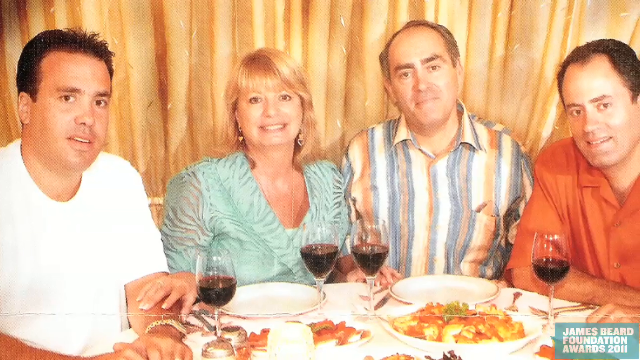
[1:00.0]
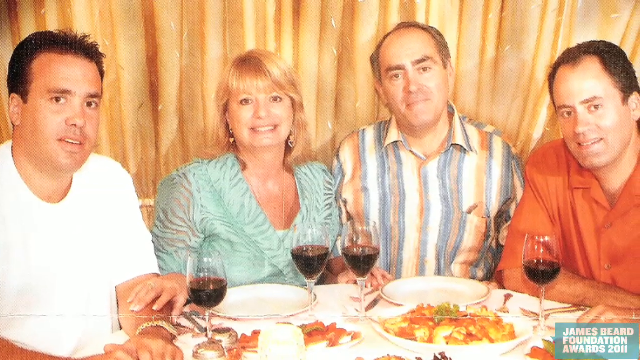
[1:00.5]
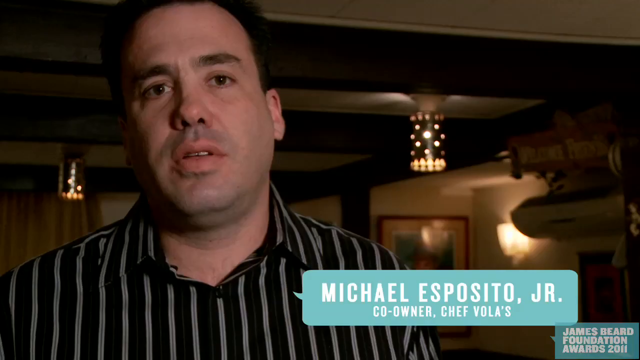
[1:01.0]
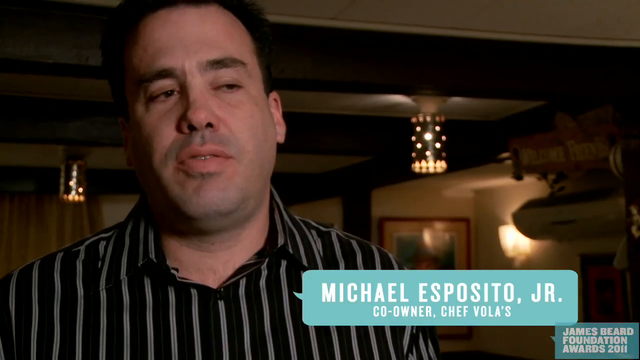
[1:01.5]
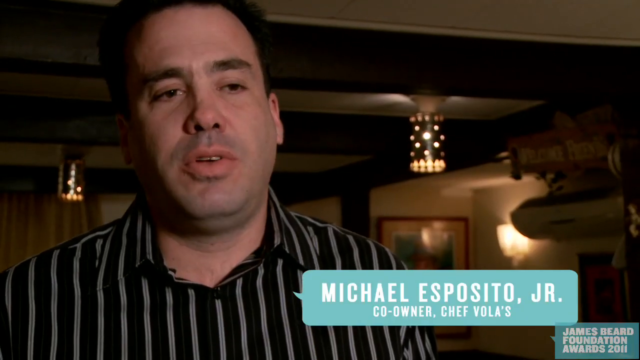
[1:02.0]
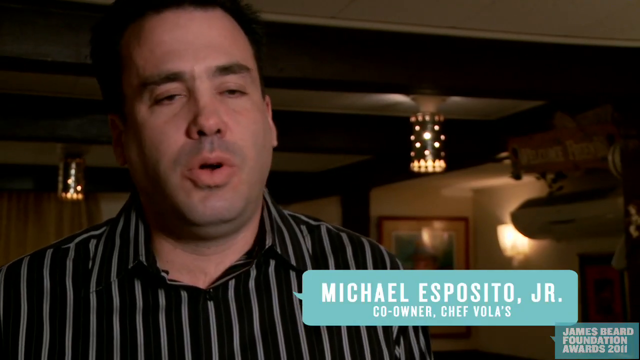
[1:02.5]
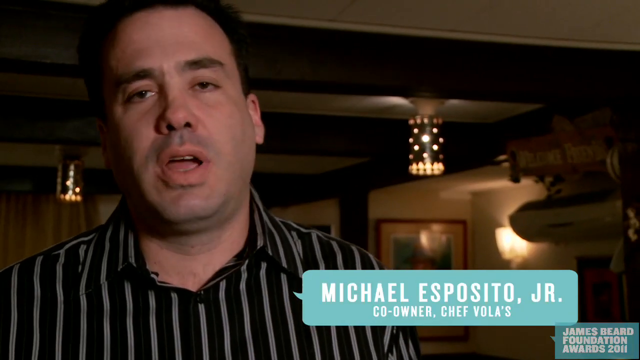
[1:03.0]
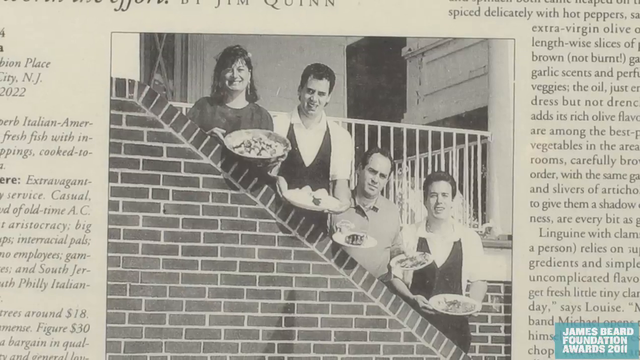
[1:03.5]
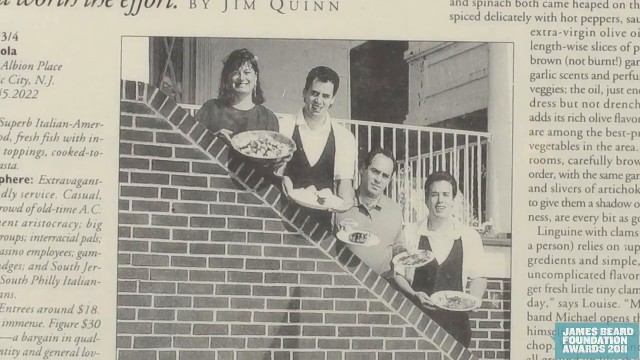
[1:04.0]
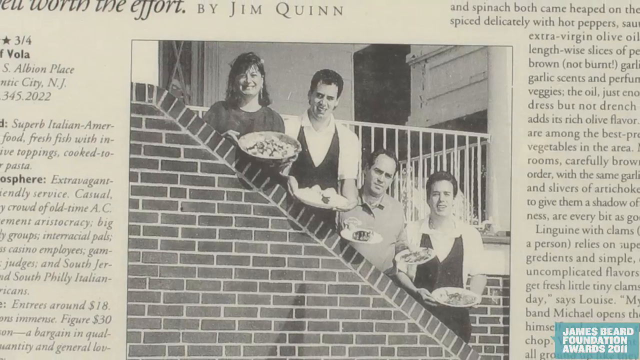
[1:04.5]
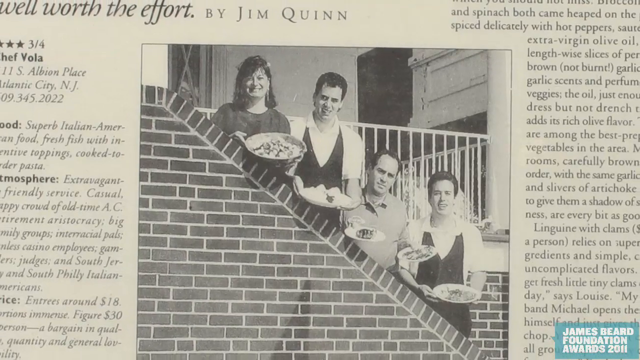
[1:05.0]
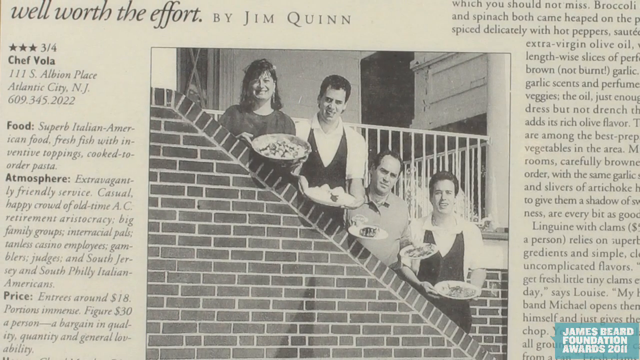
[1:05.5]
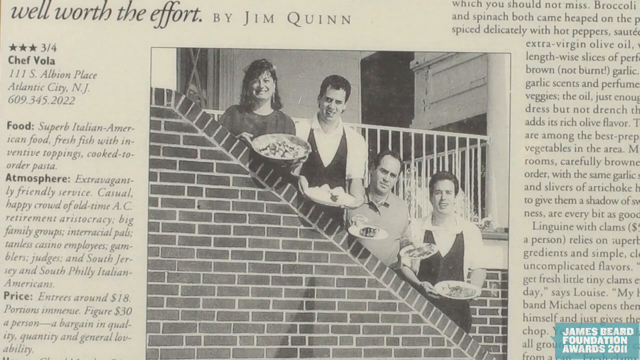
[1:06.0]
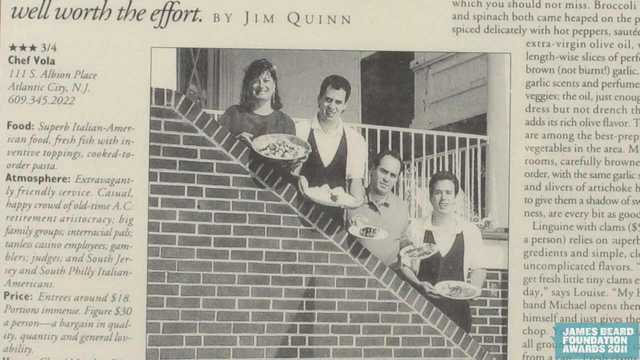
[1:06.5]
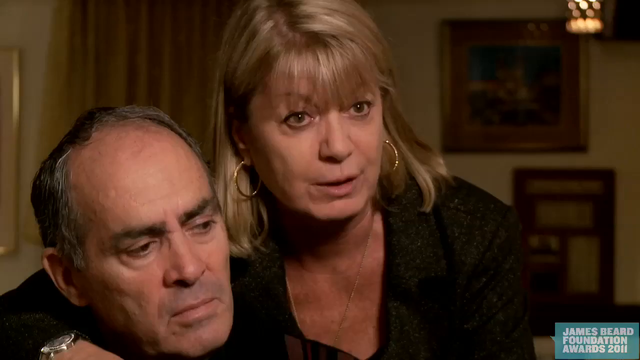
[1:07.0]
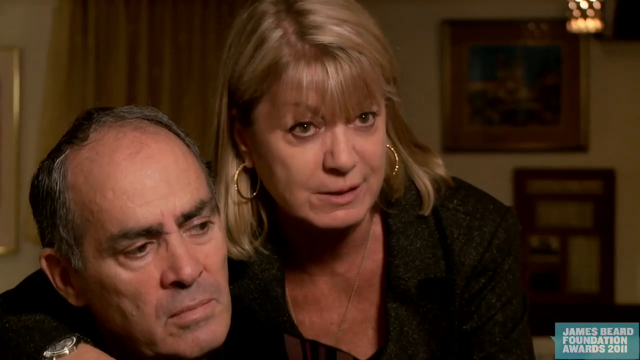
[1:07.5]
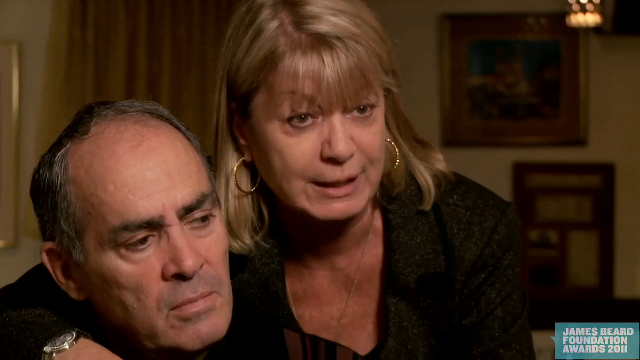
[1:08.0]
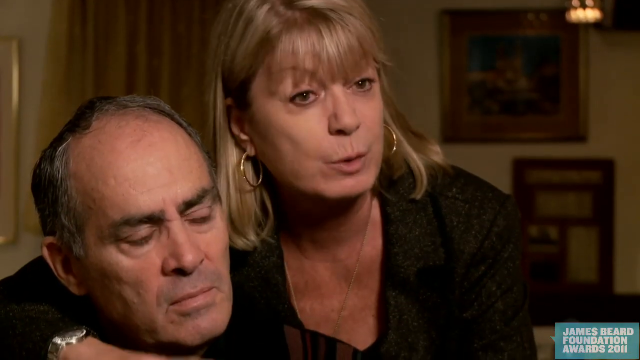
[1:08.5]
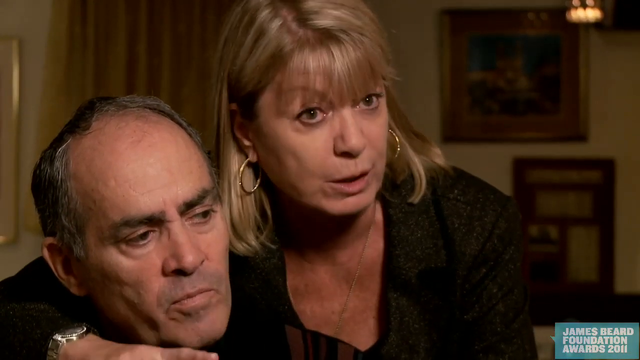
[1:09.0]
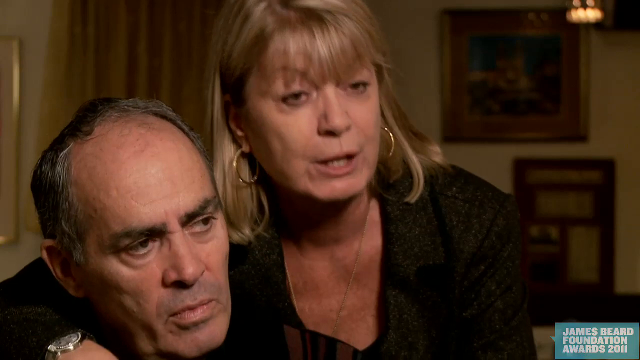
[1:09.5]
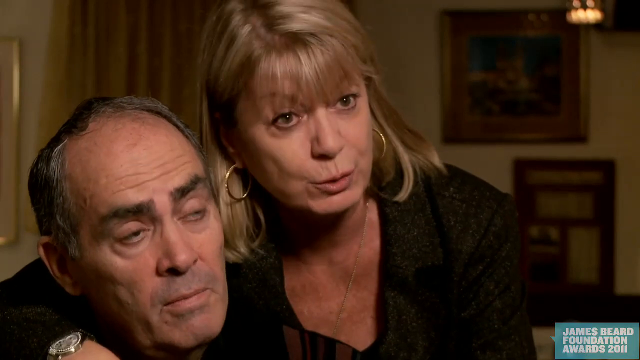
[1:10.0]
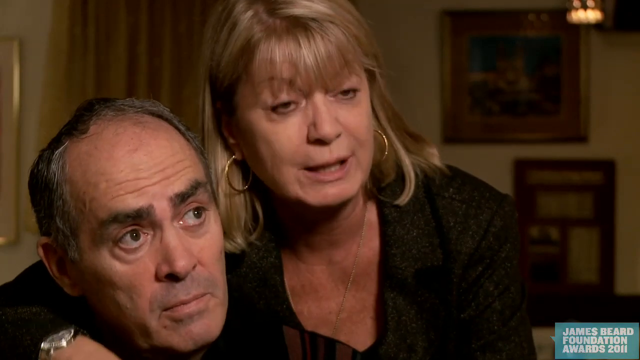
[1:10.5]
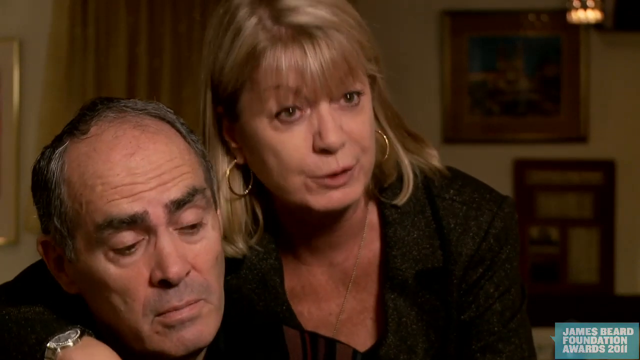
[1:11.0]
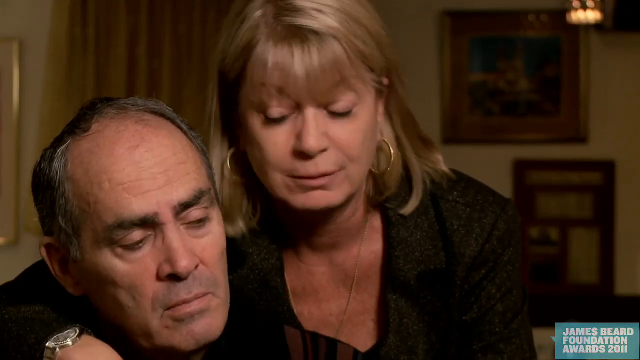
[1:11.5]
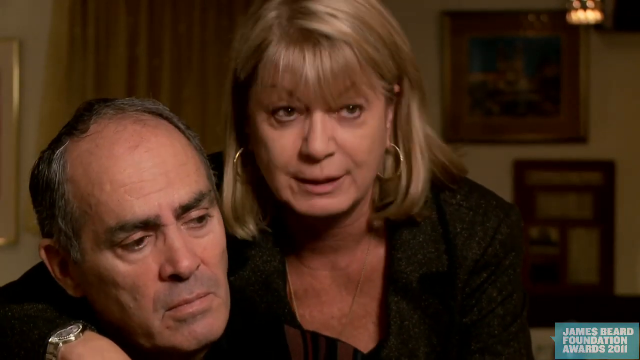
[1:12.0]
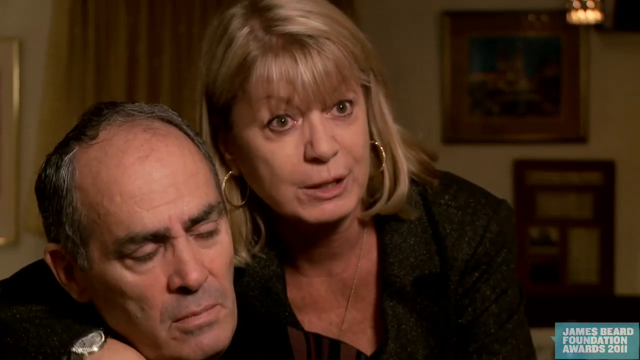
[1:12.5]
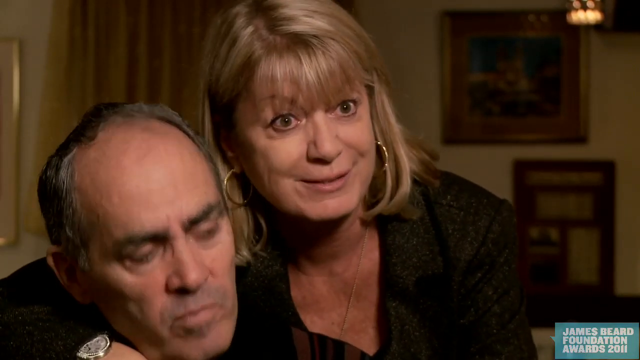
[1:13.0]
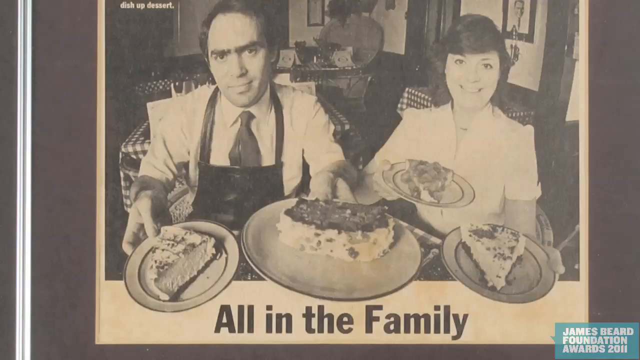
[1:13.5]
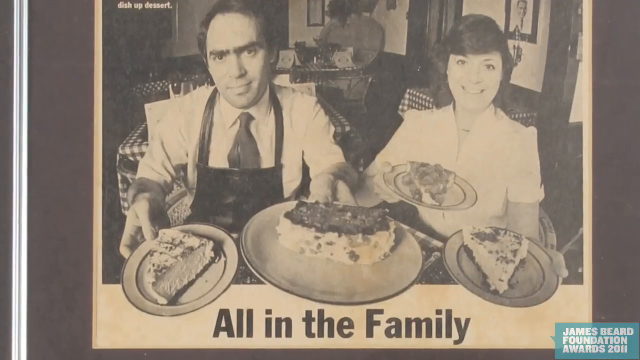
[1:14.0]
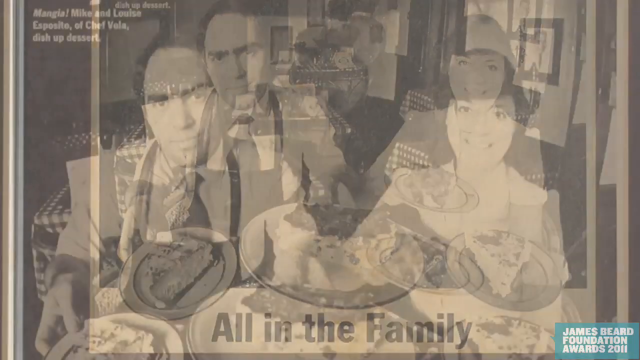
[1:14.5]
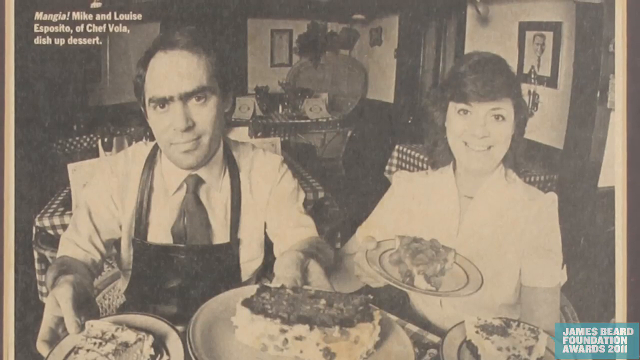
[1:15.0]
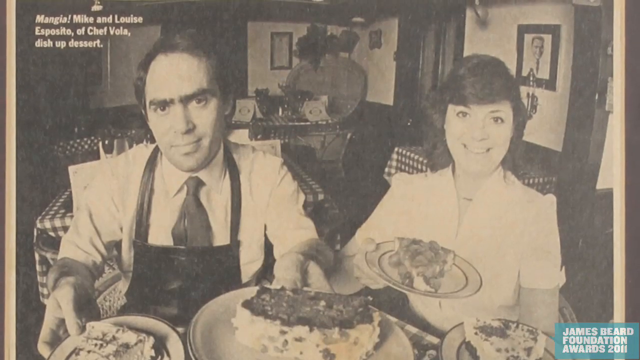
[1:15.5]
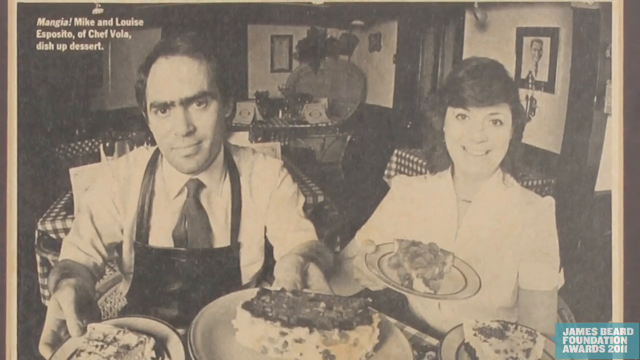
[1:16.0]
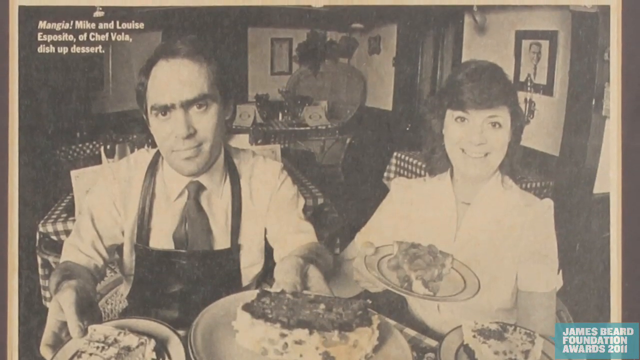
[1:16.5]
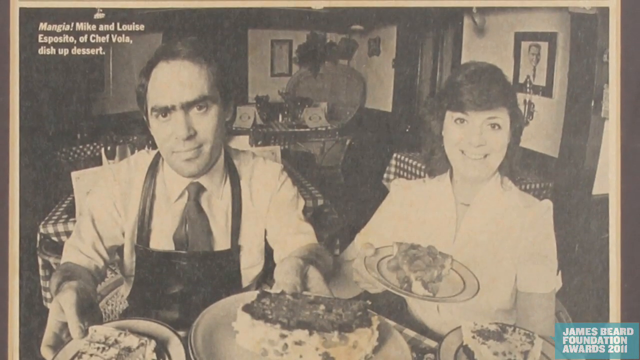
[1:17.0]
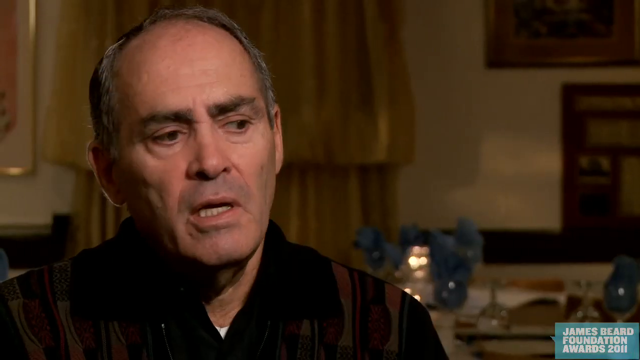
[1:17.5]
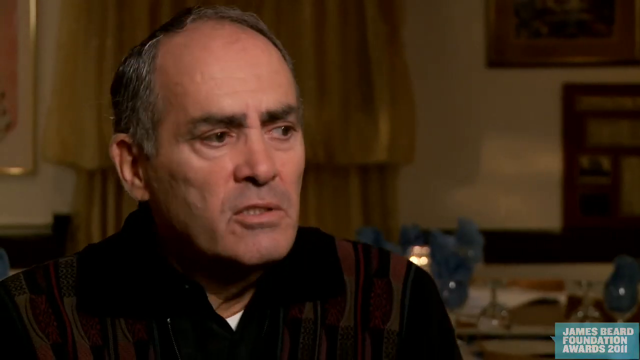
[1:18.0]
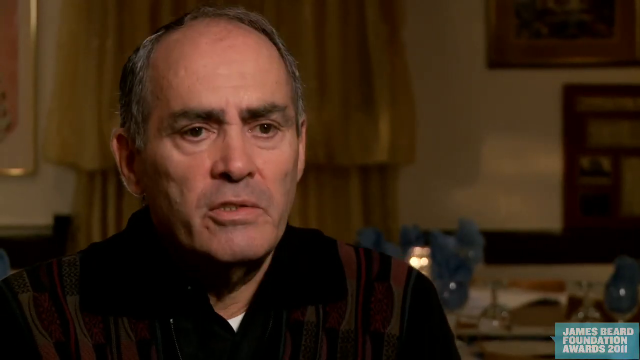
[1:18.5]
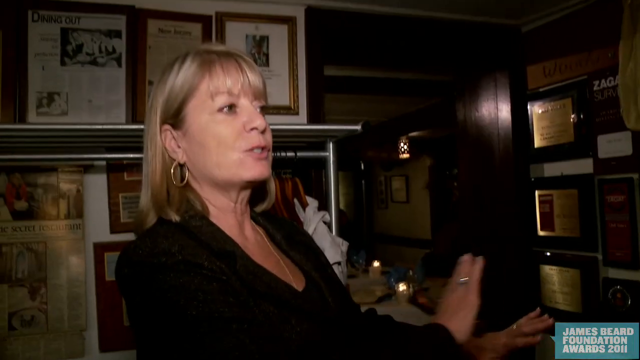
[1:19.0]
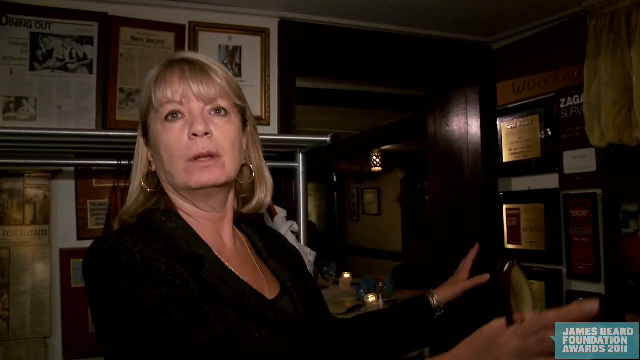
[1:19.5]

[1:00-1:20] A close-up picture shows four people, a gentleman, another gentleman, a woman and another gentleman, who look middle-aged. The camera then focuses on Michael Esposito Jr., the co-owner of Jeff Vollas, in a zebra shirt, giving an explanation. The camera zooms into some black and white pictures that seem to be old. Louis and Michael then appear on screen, with Louis holding Michael around his neck as she continues to speak. The camera focuses on another picture of them when they were young, dressed in an old-fashioned way, and lastly focuses on them.